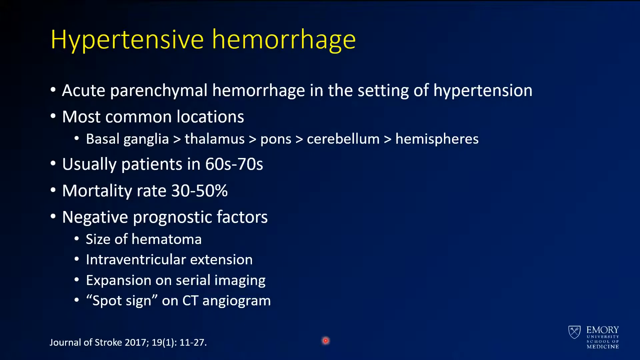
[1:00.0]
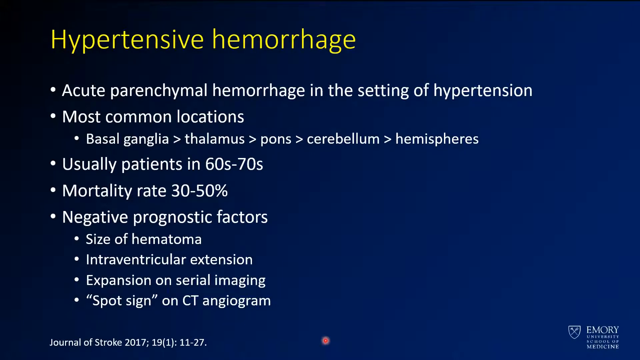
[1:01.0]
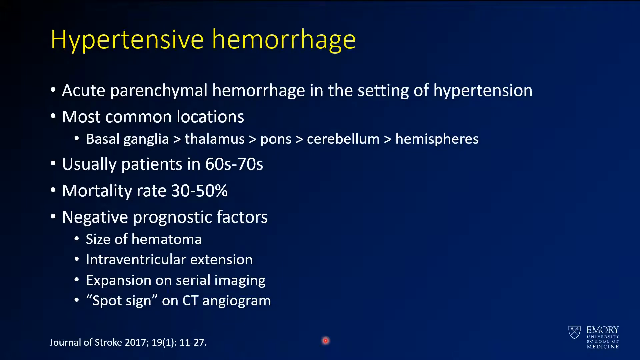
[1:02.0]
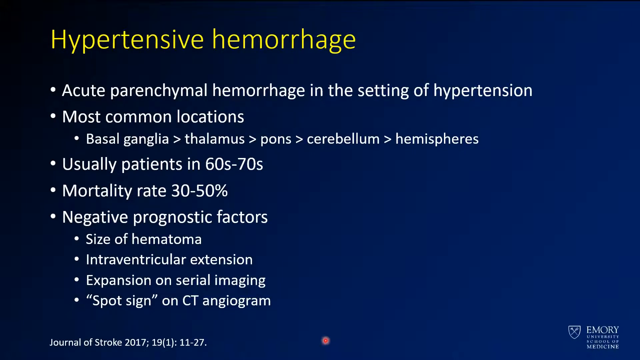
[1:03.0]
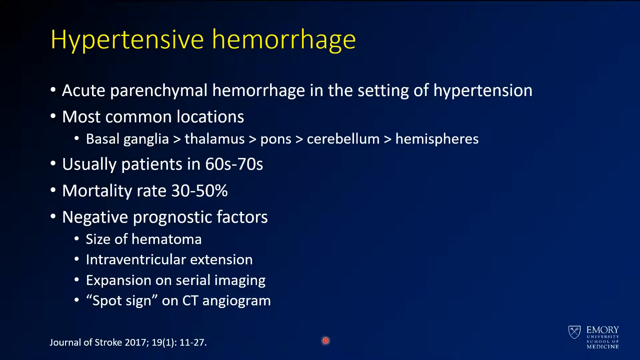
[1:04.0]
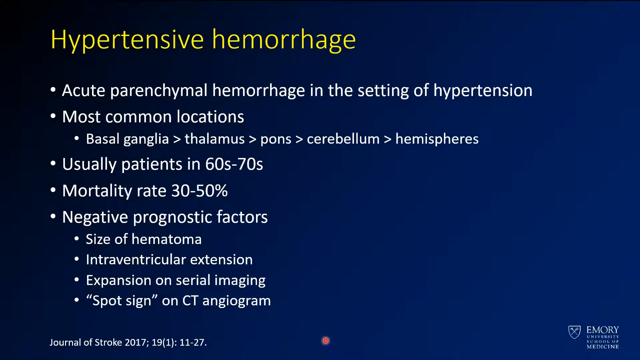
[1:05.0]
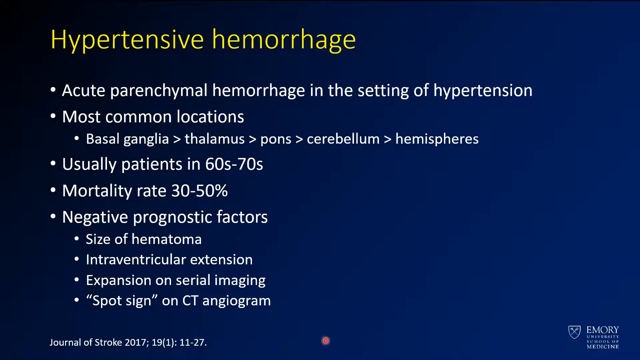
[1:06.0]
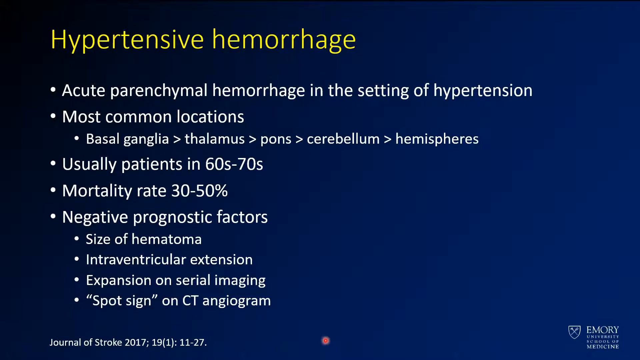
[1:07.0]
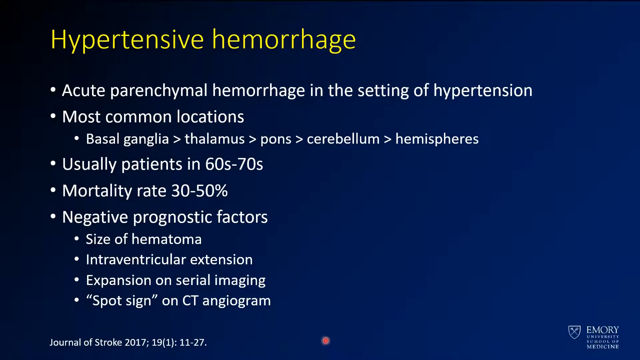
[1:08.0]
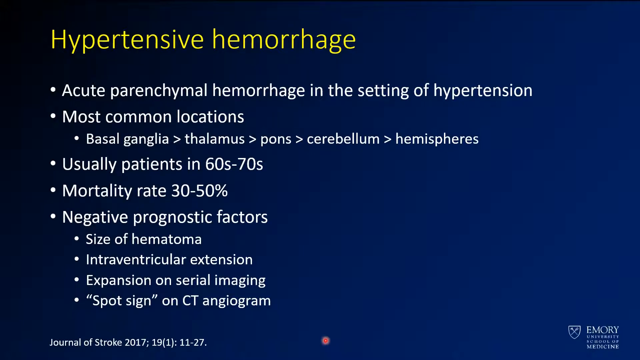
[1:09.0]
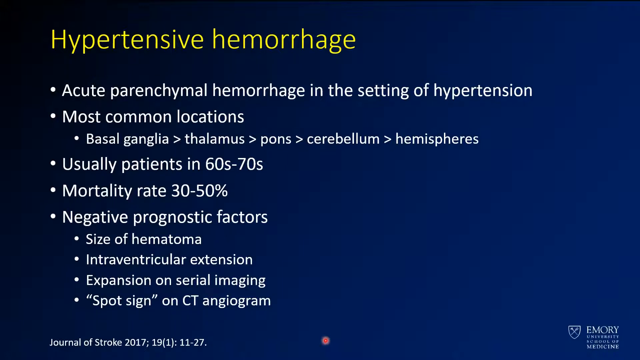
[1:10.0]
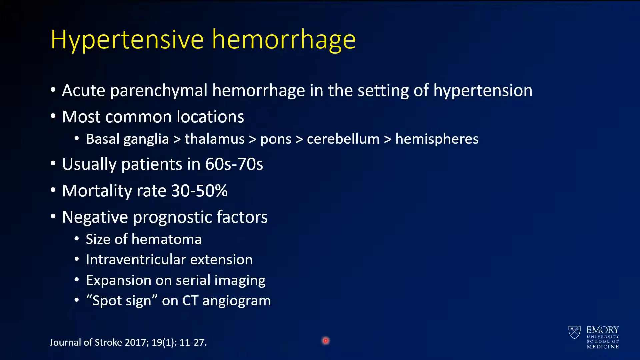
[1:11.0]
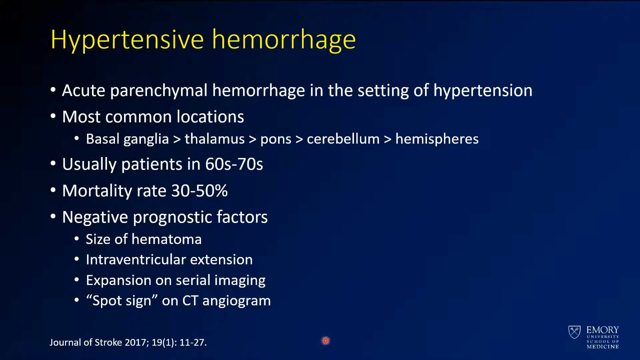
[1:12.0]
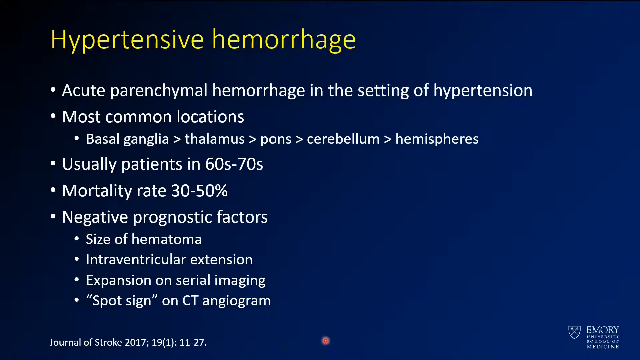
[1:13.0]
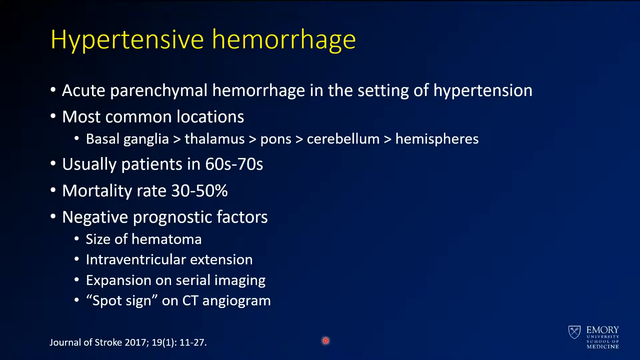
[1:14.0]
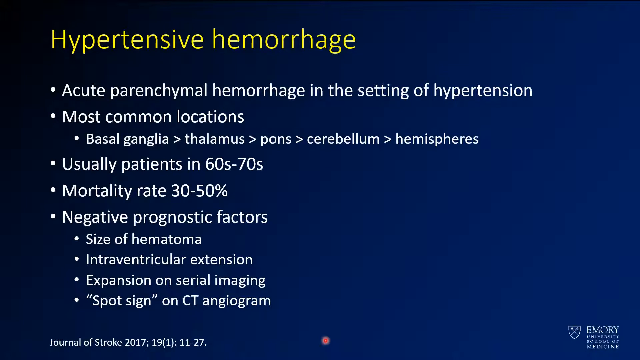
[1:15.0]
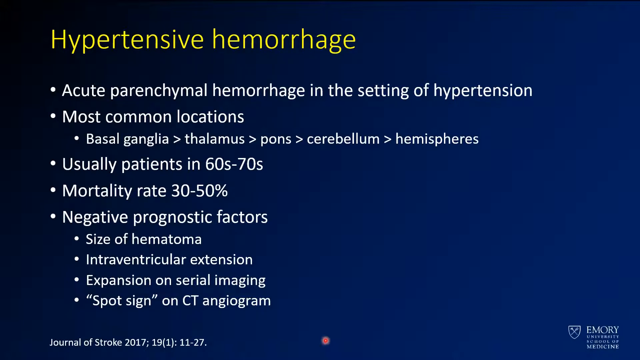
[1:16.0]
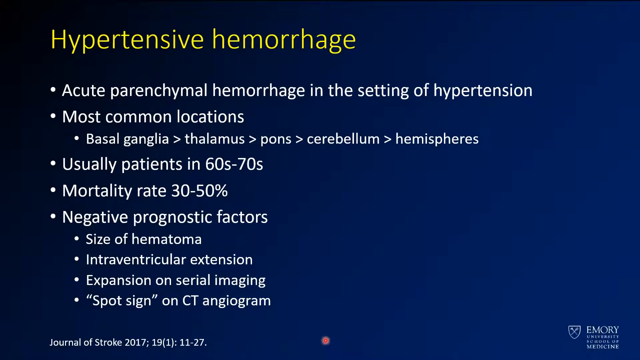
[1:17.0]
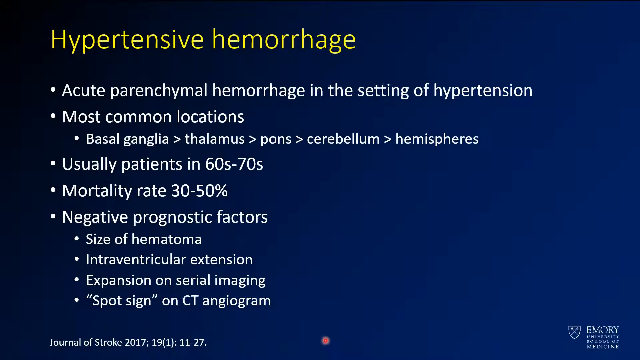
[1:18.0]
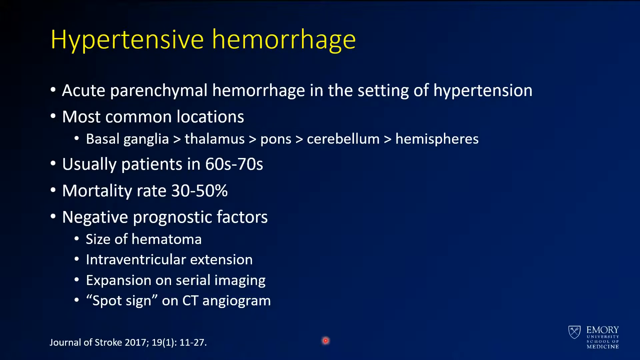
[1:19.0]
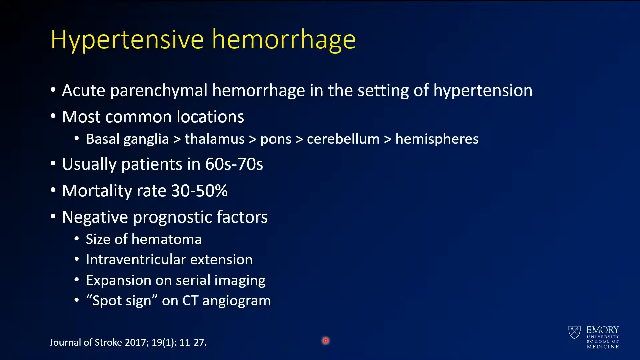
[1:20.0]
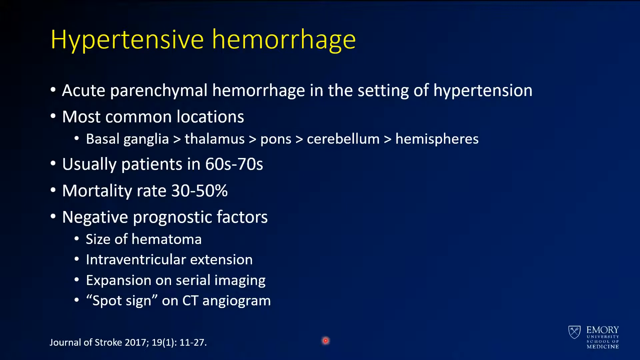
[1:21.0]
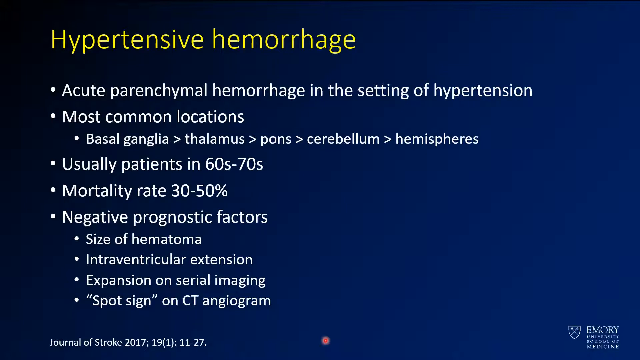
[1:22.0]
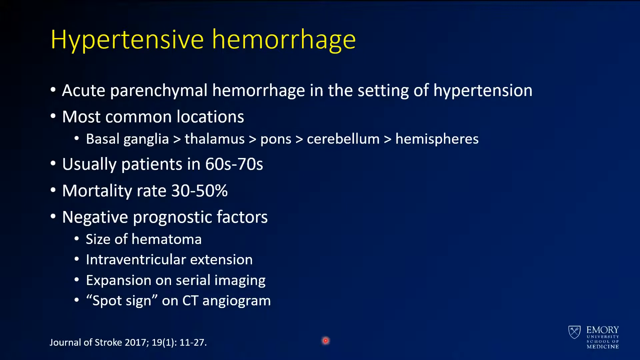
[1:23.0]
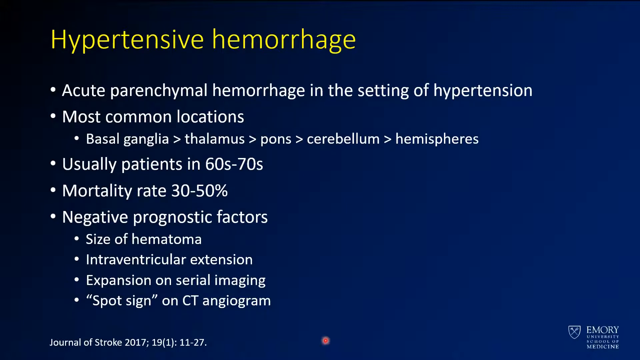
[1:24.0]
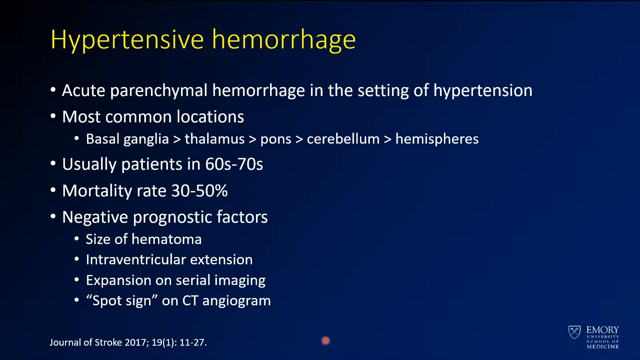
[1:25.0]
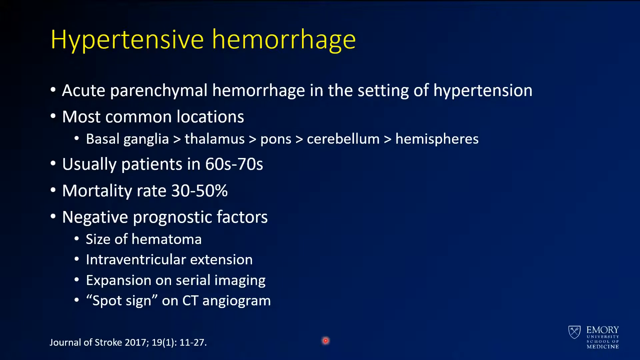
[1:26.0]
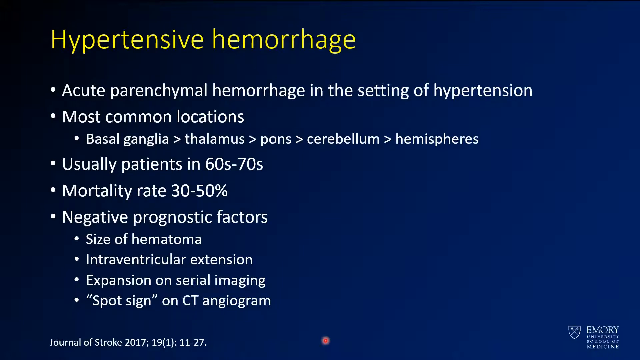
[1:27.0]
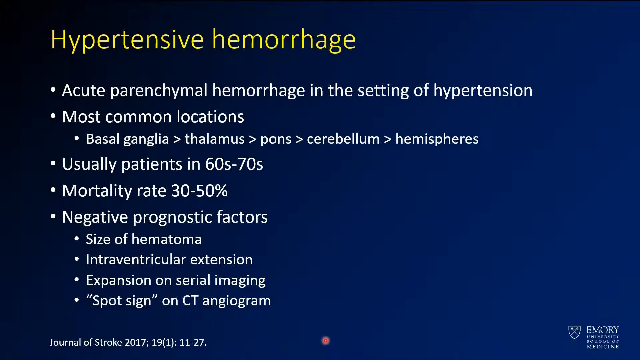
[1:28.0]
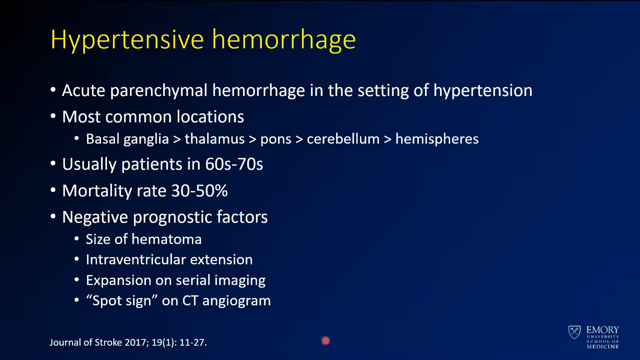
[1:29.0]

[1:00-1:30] A single slide is shown. The background is black and the slide title, in yellow, is "hypertensive hemorrhage". Bullet points in white letters follow: "acute parenchymal hemorrhage in the setting of hypertension"; "Most common locations are basal ganglia, thalamus", cerebellum, and hemispheres; "Usually the patients are in their 60s to 70s"; "The mortality rate is 30% to 50%"; and negative prognostic factors, which include size of hematoma, intraventricular extension, expansion on serial imaging, and spot sign on CT angiogram. Under most common locations, basal ganglia is indented, and everything after negative prognostic factors is indented as a sublist. The sublists and indentations are in a smaller font than the main list, which is all in a single font.